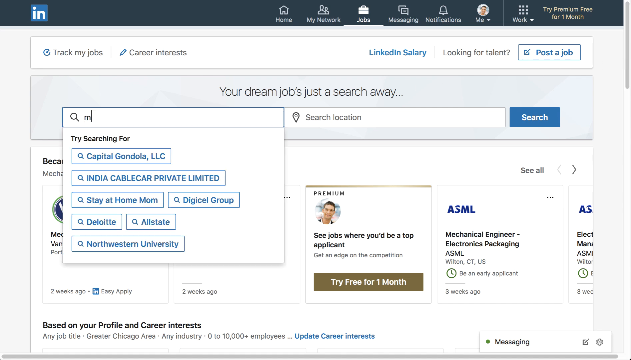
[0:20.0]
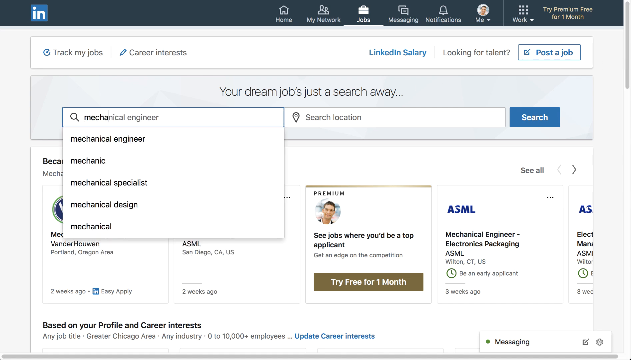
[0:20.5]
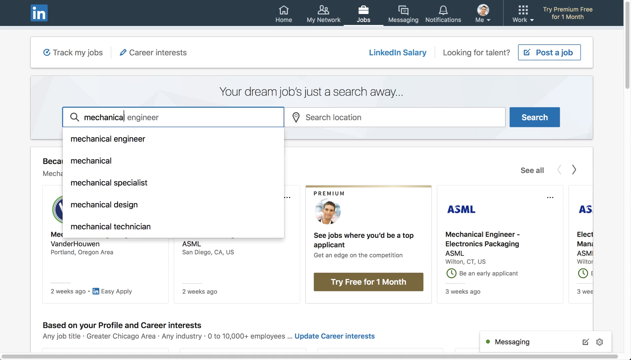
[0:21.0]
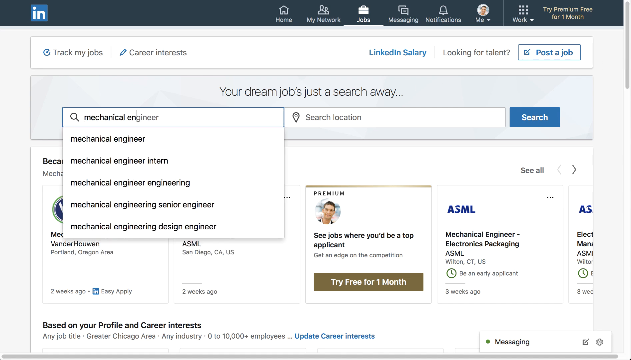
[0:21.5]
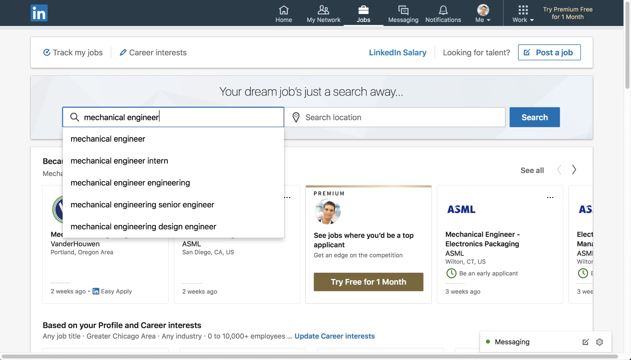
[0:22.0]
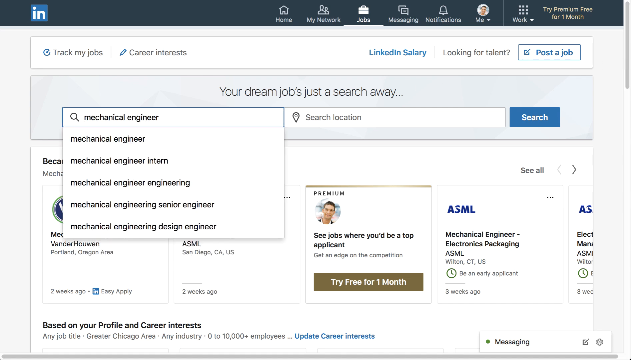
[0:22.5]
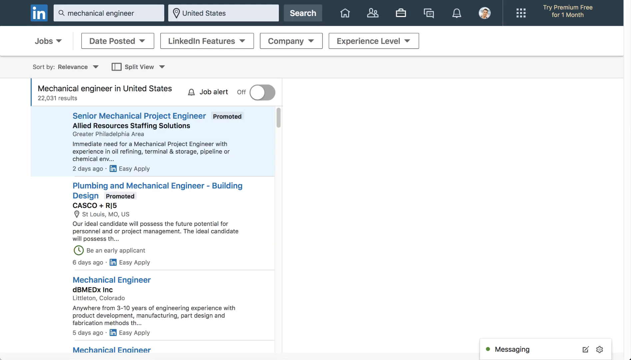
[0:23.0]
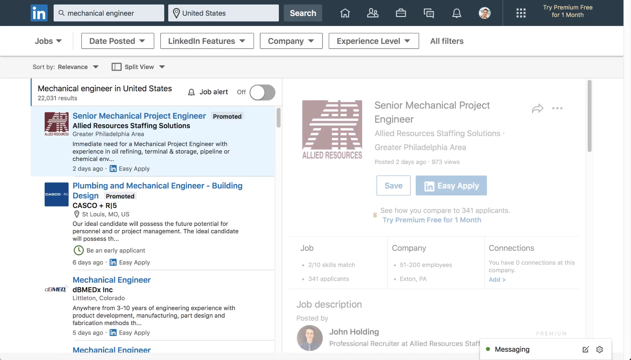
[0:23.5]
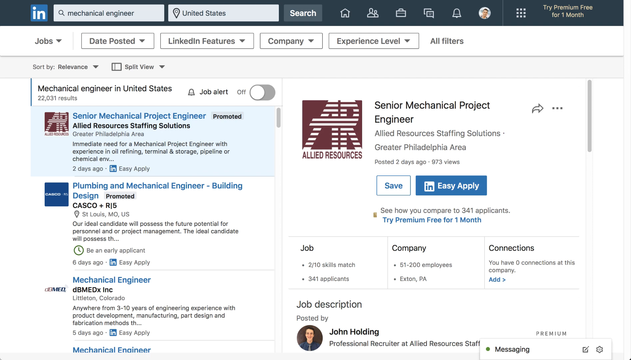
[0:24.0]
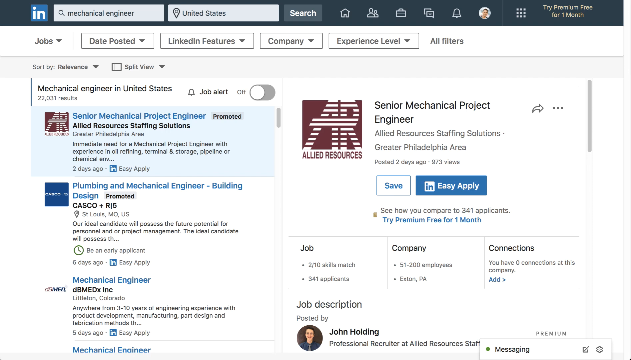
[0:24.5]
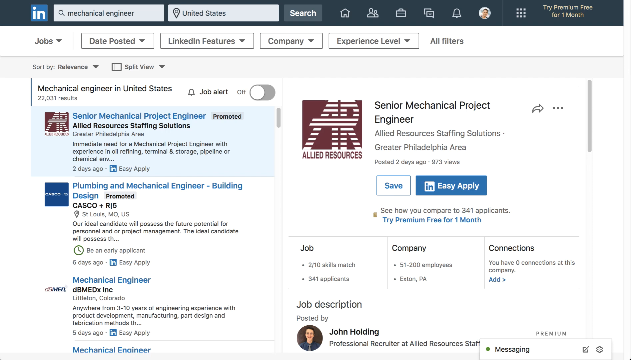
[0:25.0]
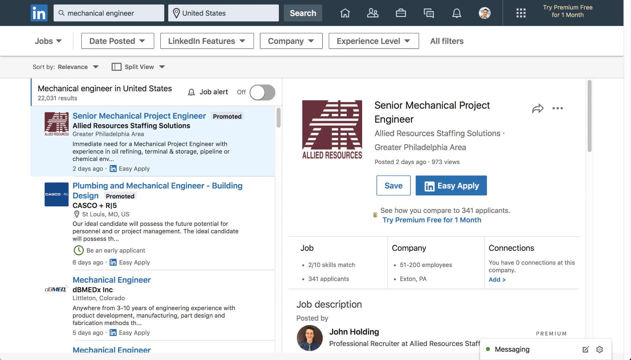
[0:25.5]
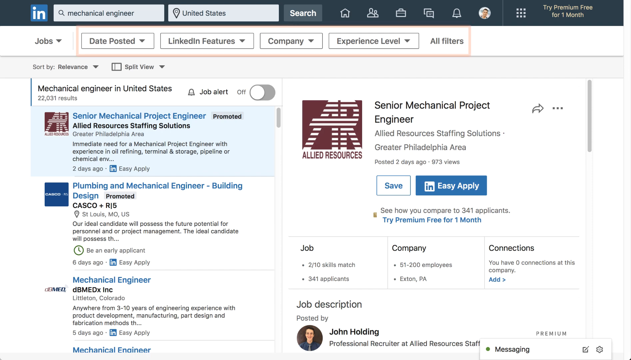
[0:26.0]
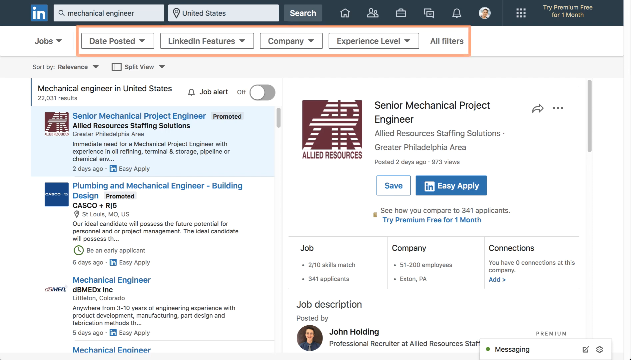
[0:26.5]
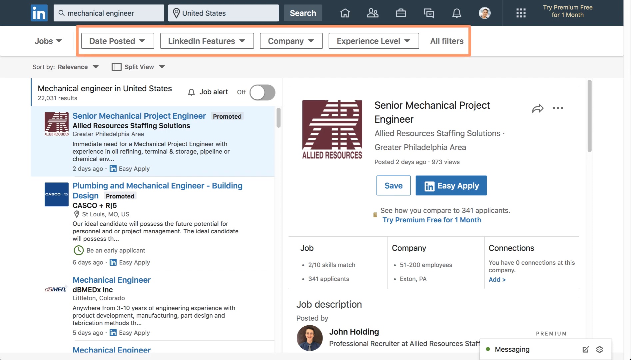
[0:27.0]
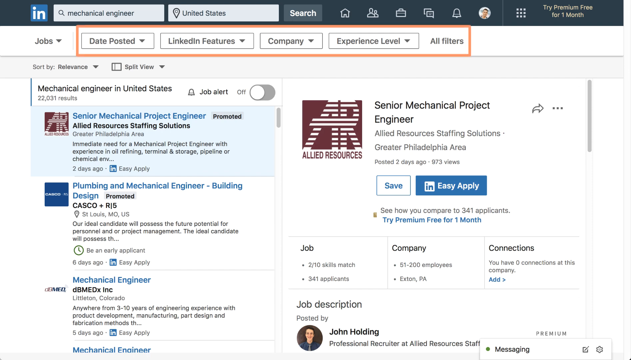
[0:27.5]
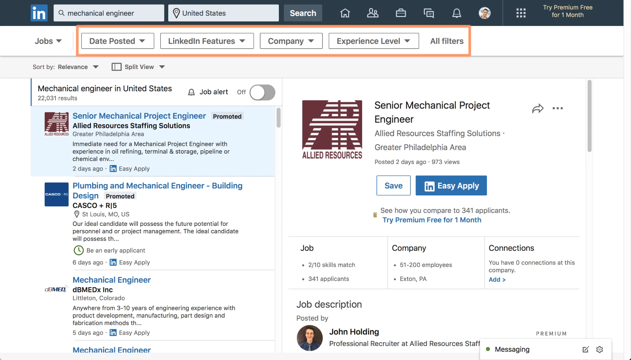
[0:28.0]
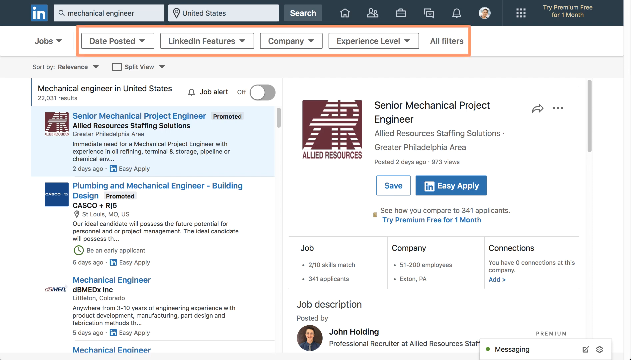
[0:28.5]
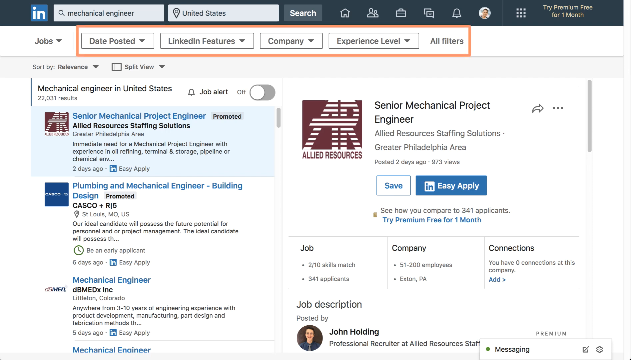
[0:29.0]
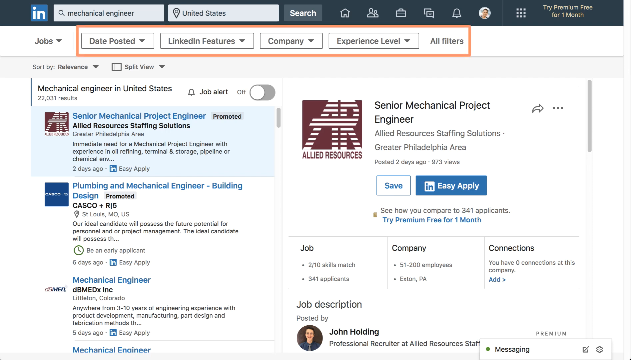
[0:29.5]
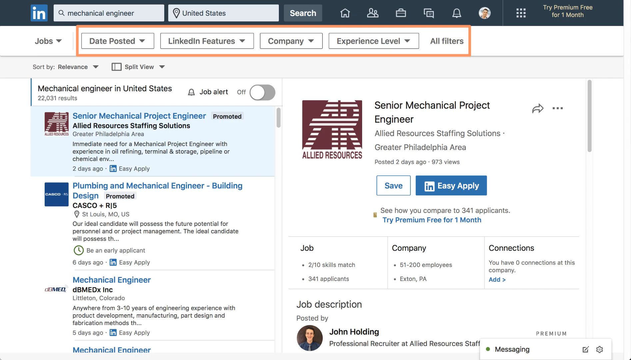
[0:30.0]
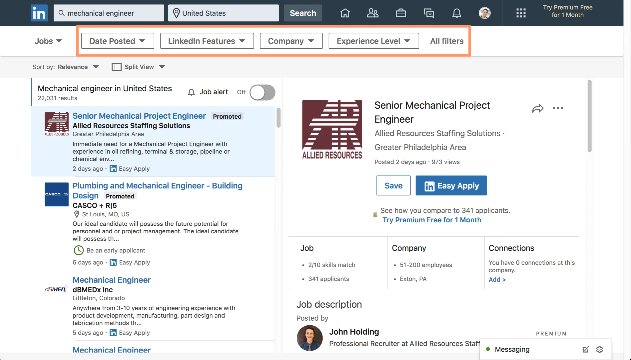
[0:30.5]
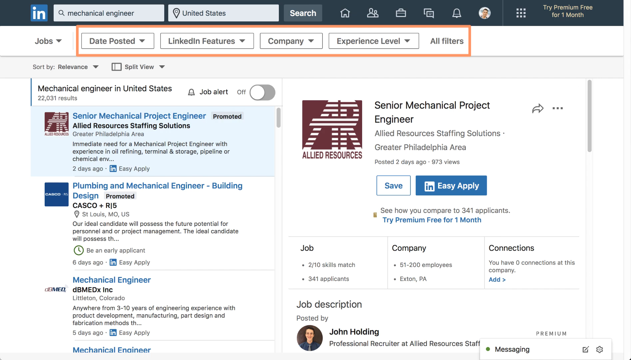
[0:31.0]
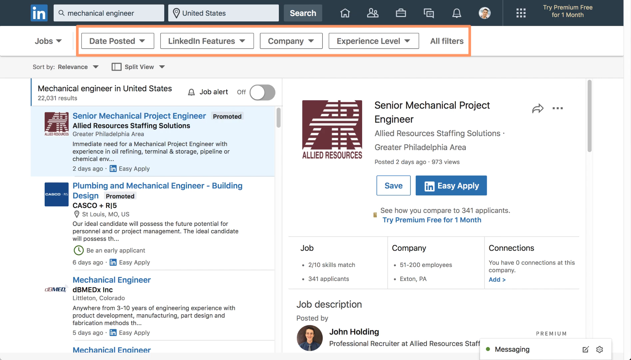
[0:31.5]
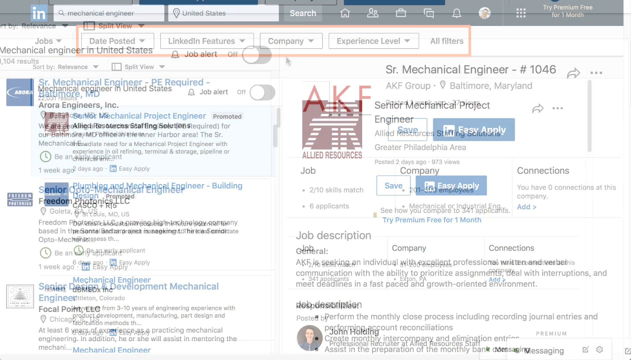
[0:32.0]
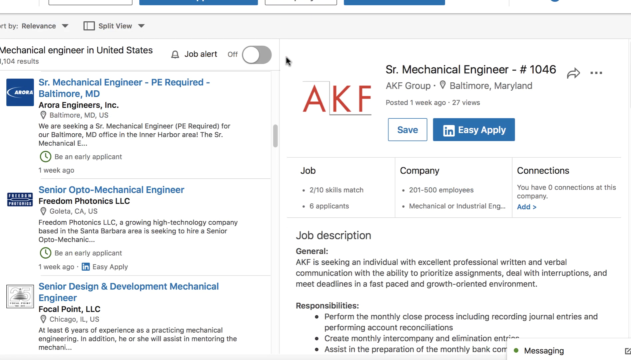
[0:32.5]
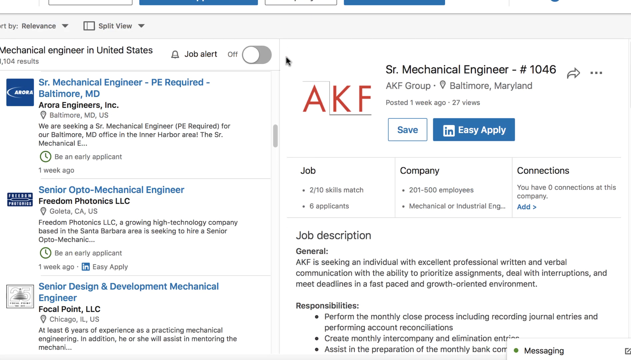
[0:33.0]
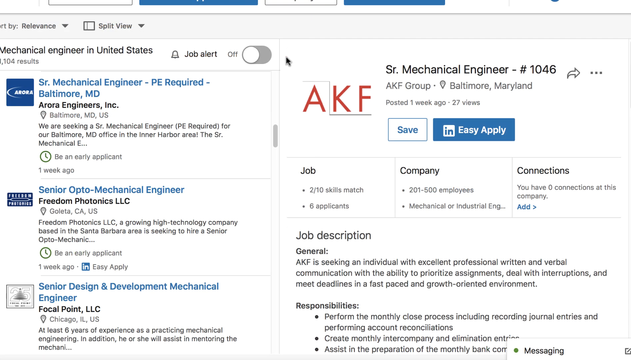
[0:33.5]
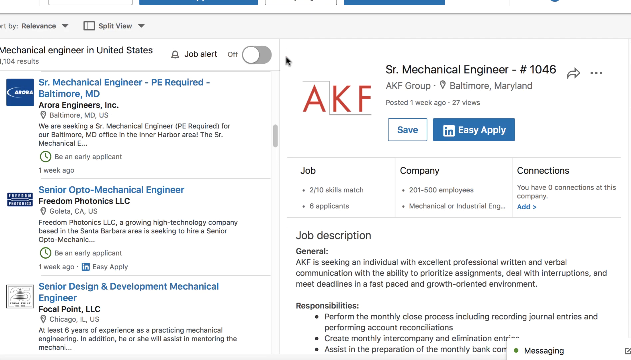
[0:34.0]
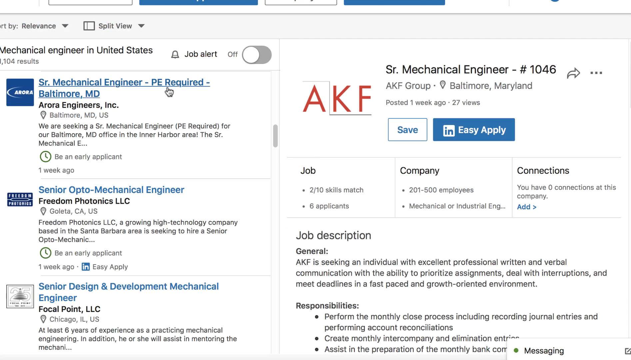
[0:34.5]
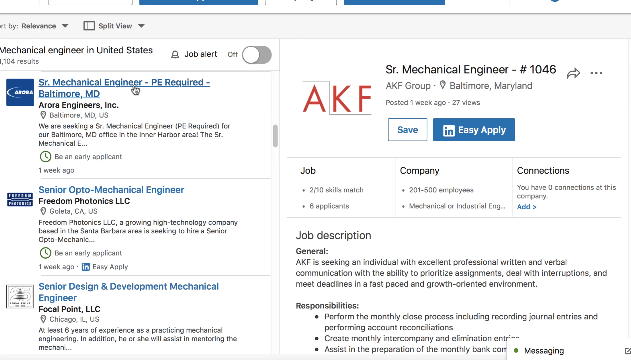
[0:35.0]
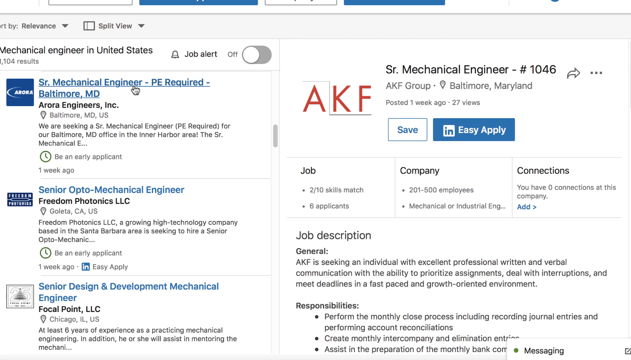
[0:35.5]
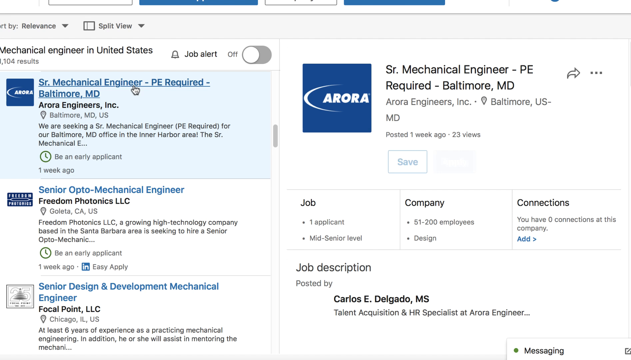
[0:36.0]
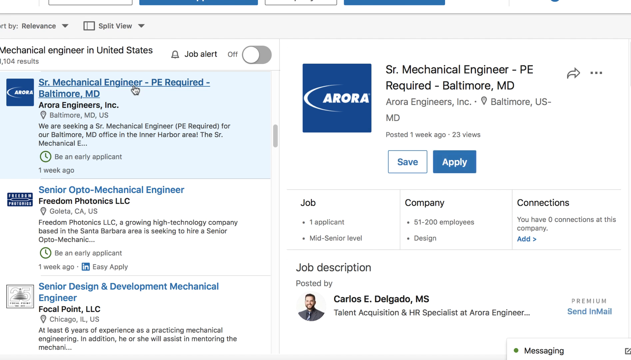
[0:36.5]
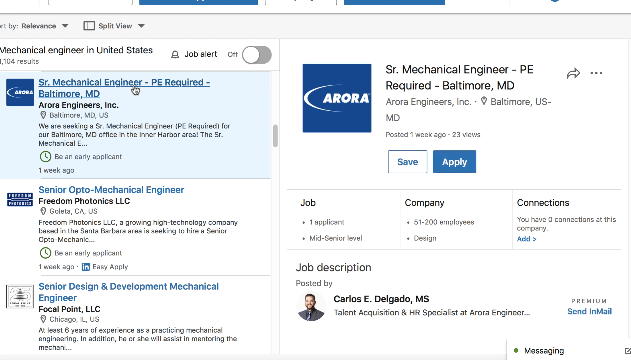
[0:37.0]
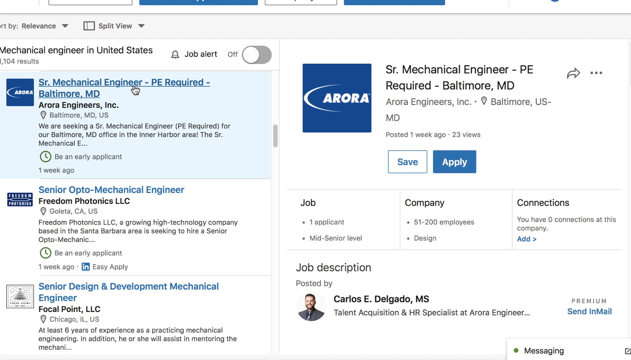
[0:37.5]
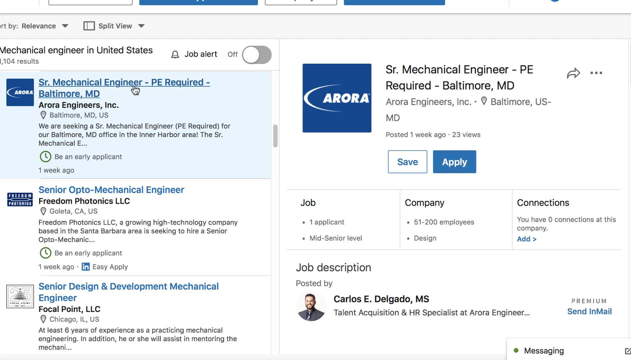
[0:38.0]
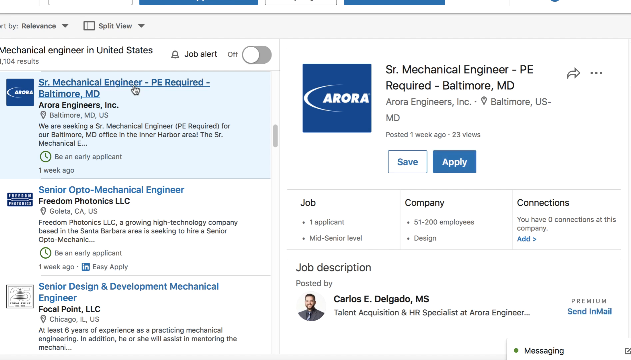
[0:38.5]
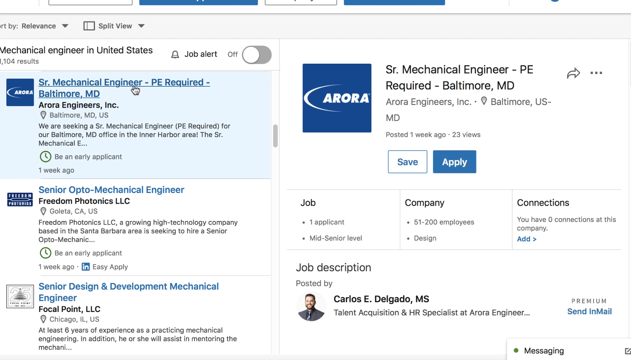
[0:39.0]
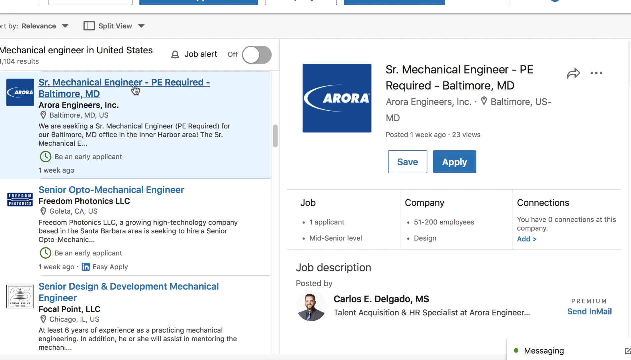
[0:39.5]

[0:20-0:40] The user types Mechanical Engineer into the job search field and presses Enter. Results for Mechanical Engineer in the United States appear, including a Senior Mechanical Project Engineer listing, a Plumbing and Mechanical Engineer listing, and a Mechanical Engineer listing by DBMEDX Incorporated. The screen then shows more mechanical engineer listings: Senior Mechanical Engineer, Senior Optomechanical Engineer, and Senior Design and Development Mechanical Engineer. The user clicks the Senior Mechanical Engineer listing, which brings up the company's logo and listing on the right side of the screen. The listing is by Arora, whose logo is blue with a white half circle around the word Arora. The listing is located in Baltimore in the United States and states that a PE is required.